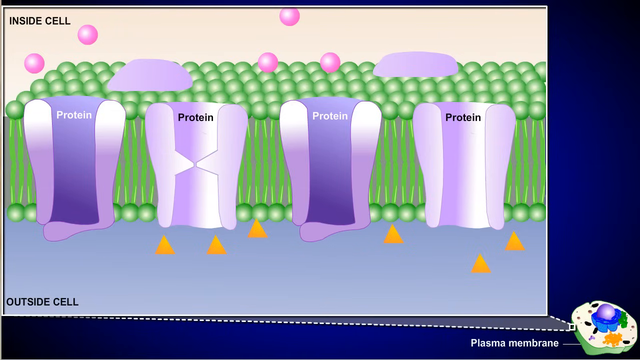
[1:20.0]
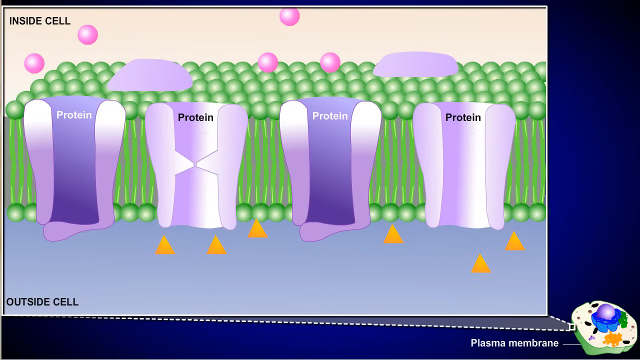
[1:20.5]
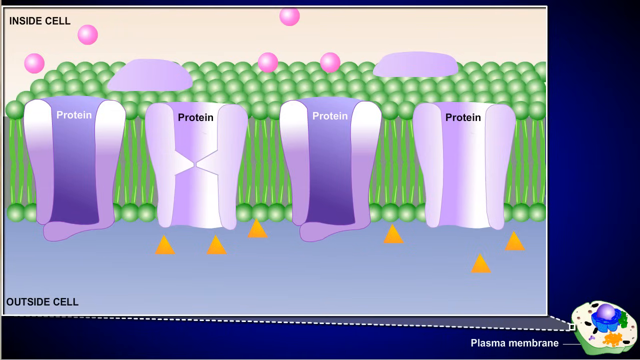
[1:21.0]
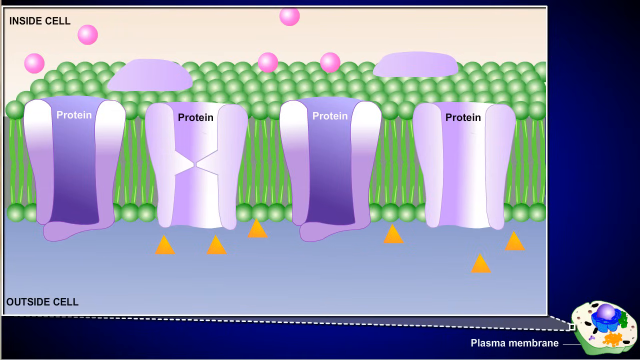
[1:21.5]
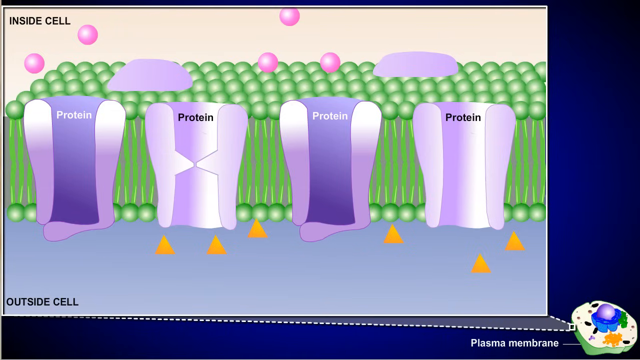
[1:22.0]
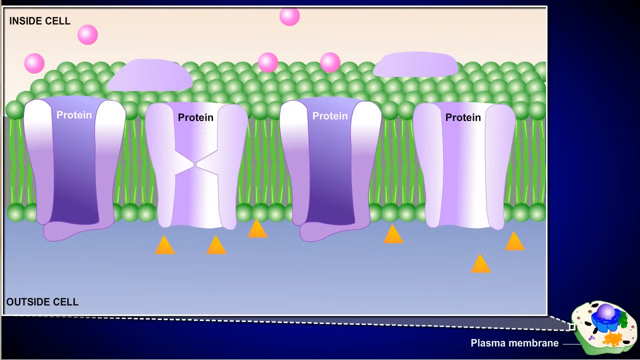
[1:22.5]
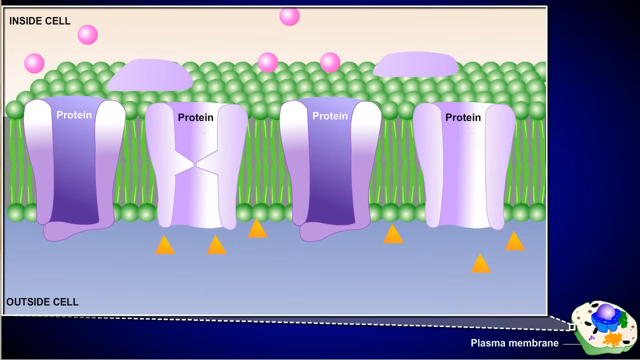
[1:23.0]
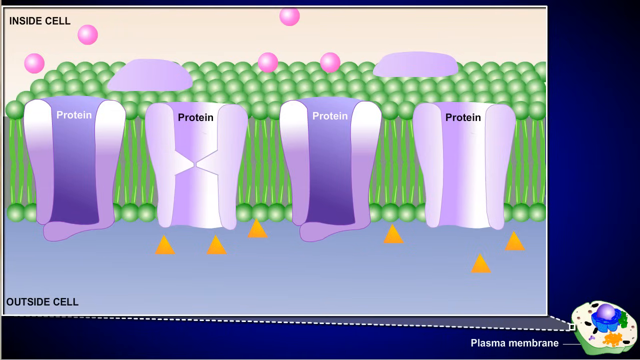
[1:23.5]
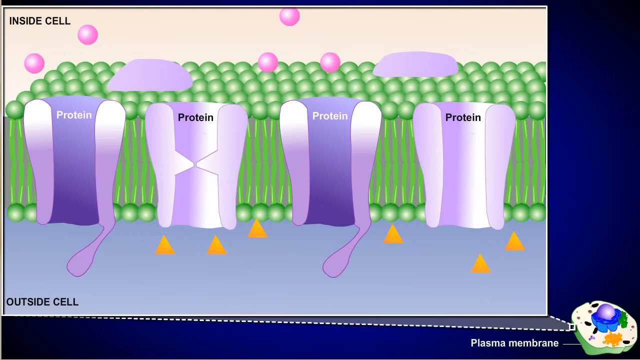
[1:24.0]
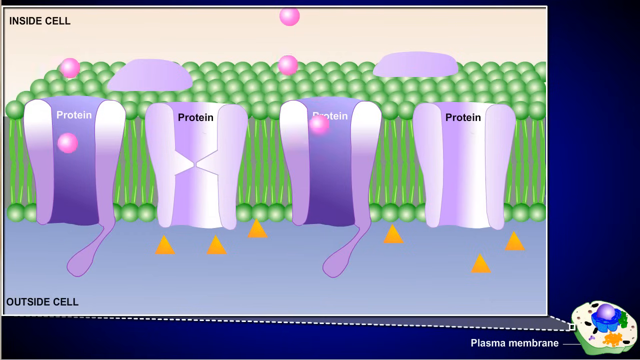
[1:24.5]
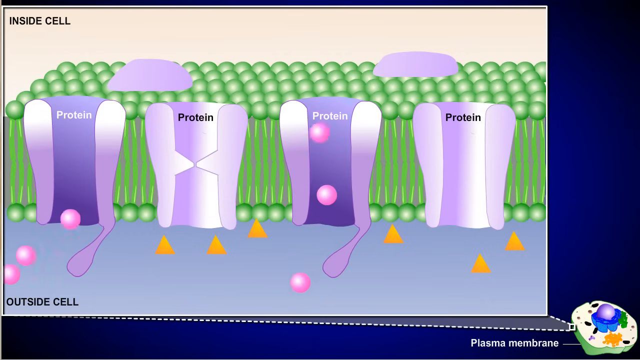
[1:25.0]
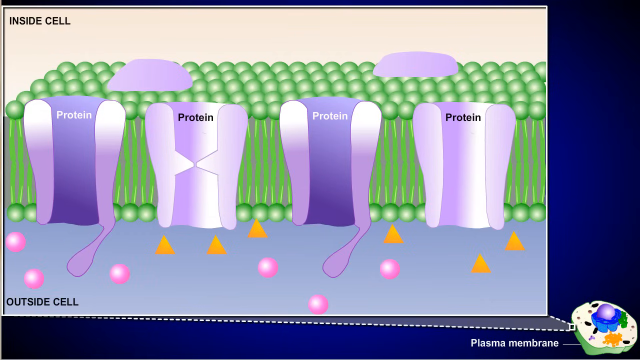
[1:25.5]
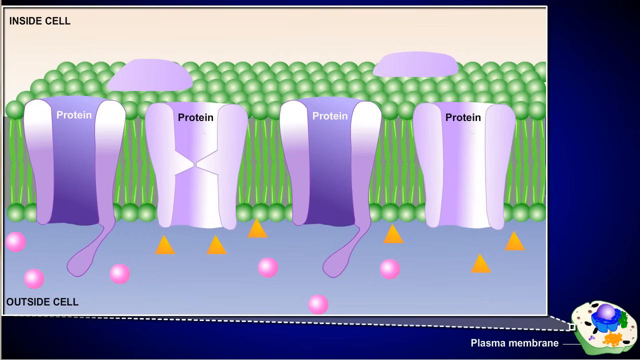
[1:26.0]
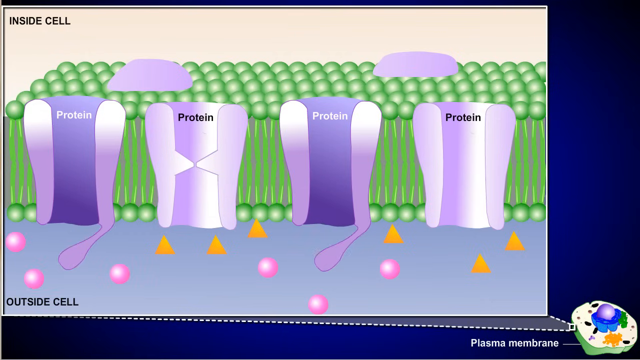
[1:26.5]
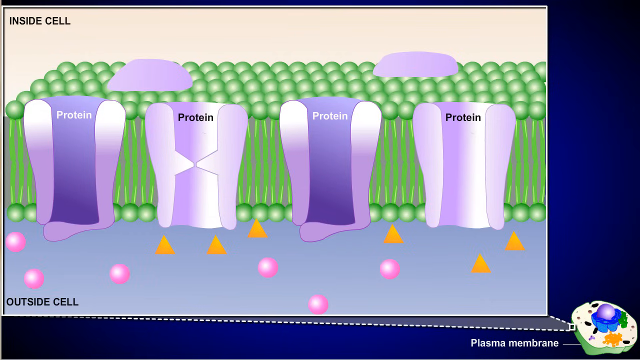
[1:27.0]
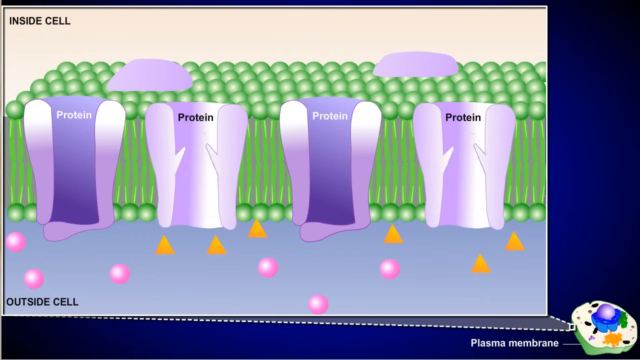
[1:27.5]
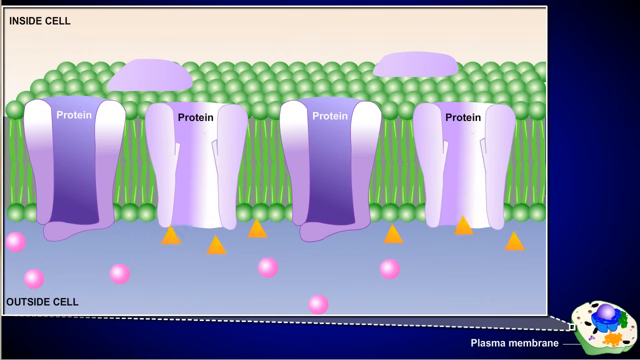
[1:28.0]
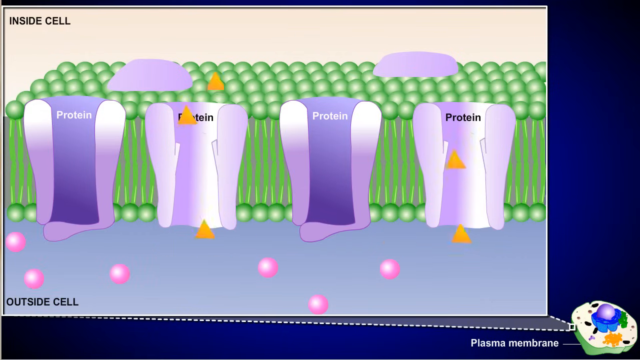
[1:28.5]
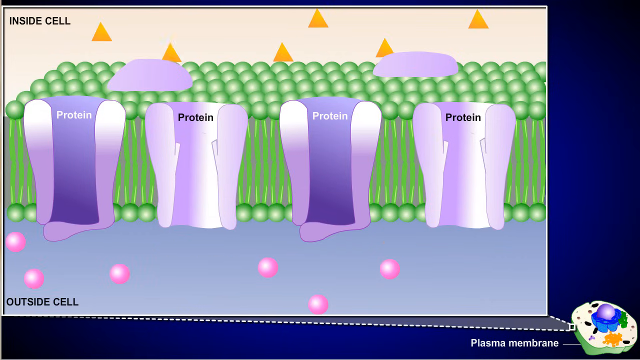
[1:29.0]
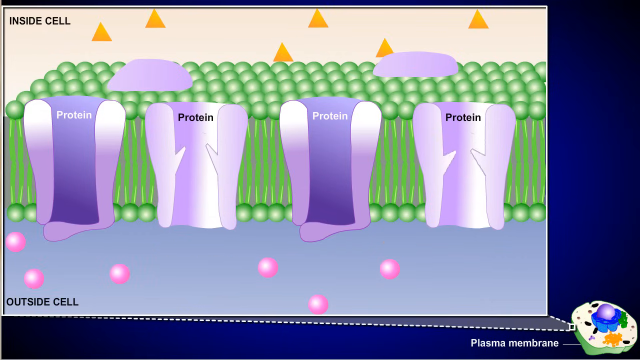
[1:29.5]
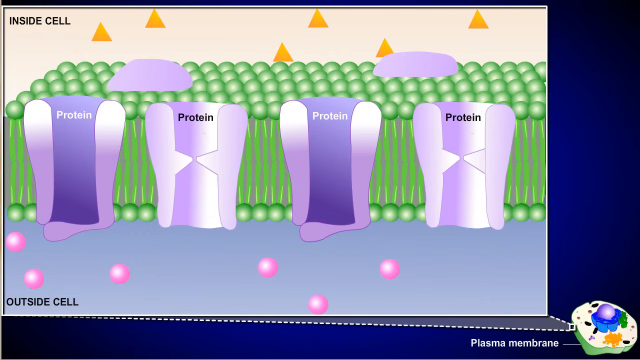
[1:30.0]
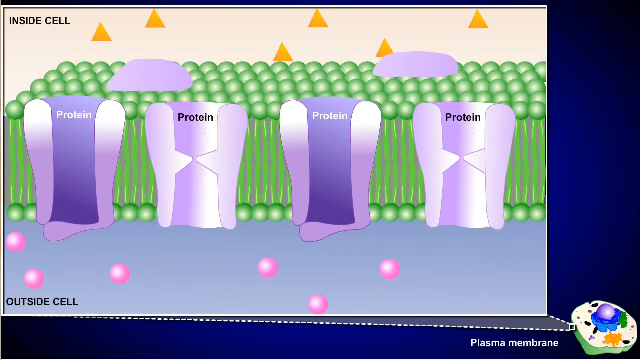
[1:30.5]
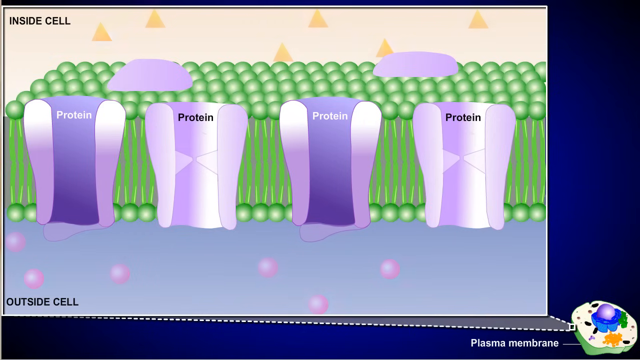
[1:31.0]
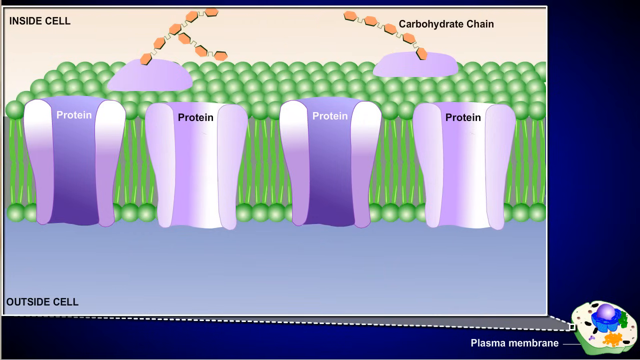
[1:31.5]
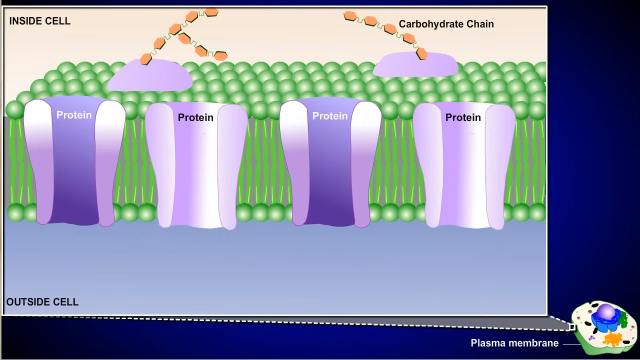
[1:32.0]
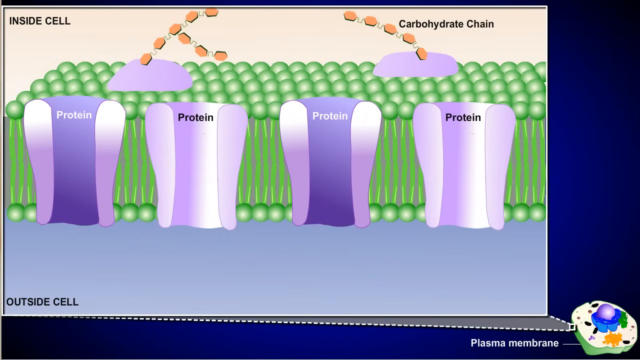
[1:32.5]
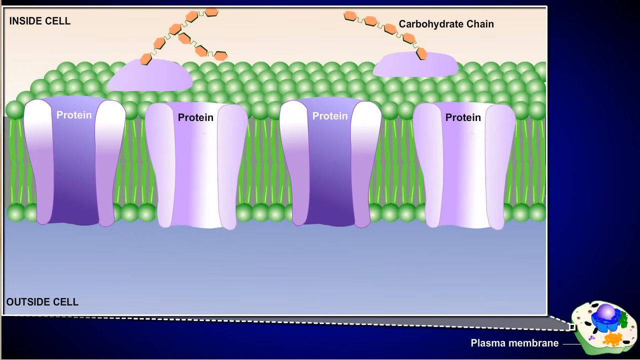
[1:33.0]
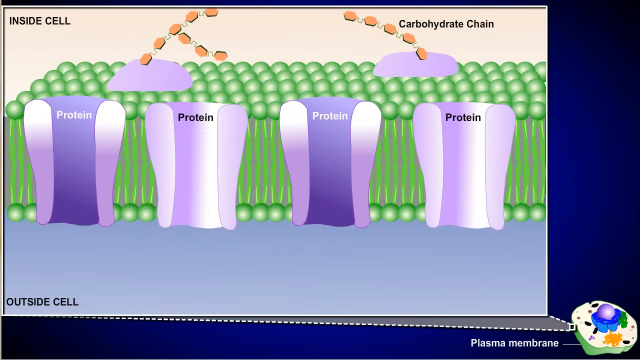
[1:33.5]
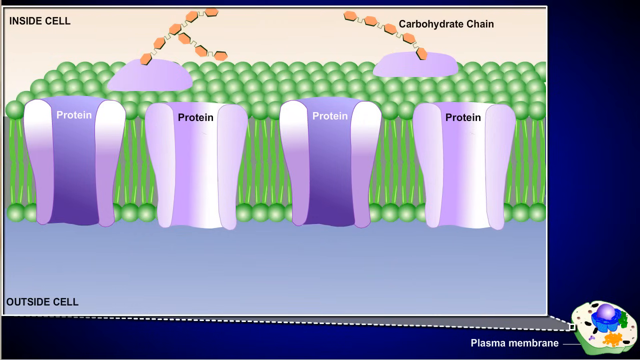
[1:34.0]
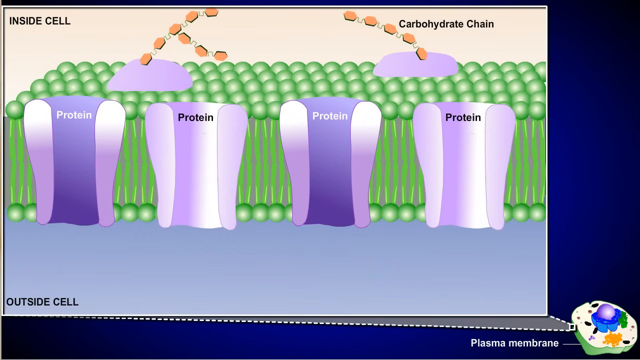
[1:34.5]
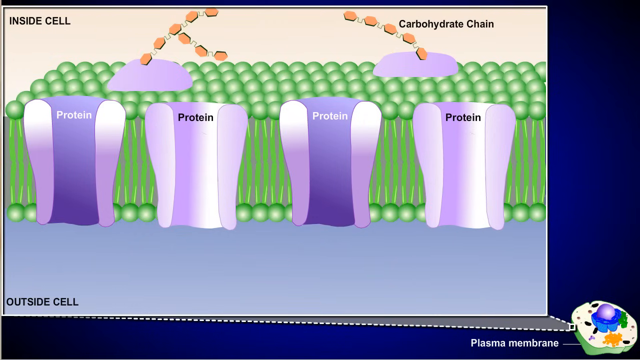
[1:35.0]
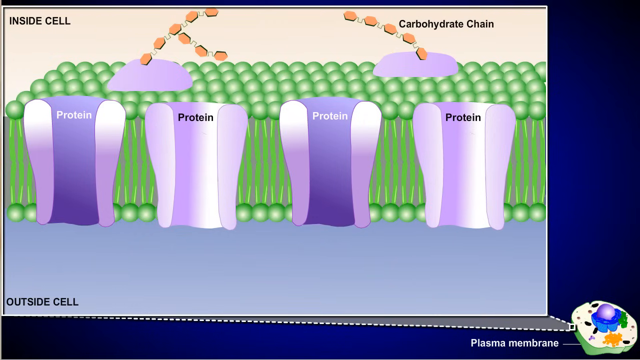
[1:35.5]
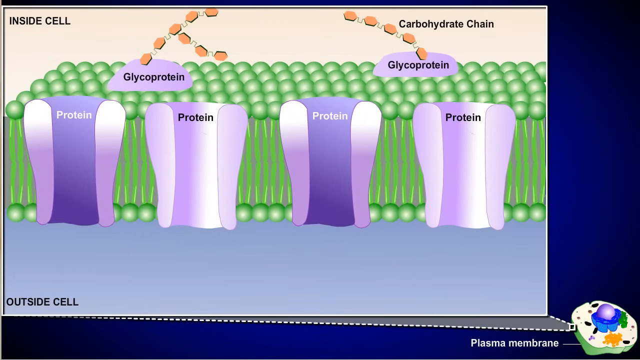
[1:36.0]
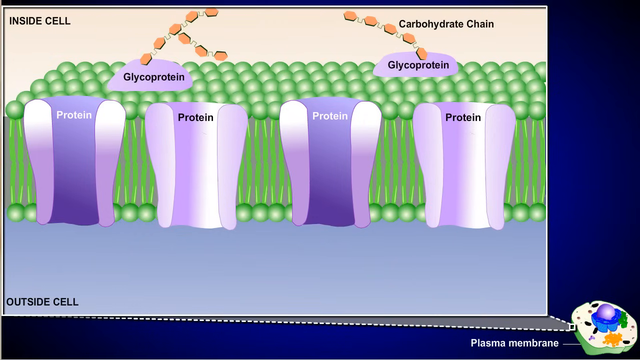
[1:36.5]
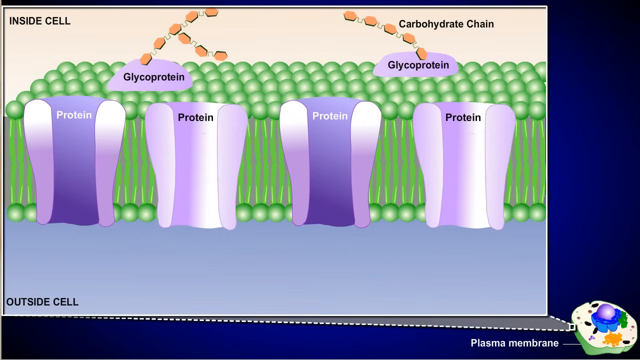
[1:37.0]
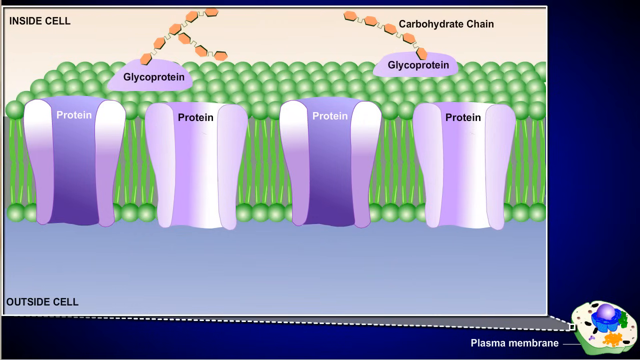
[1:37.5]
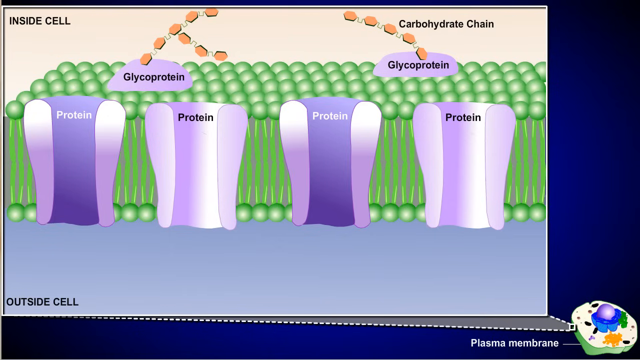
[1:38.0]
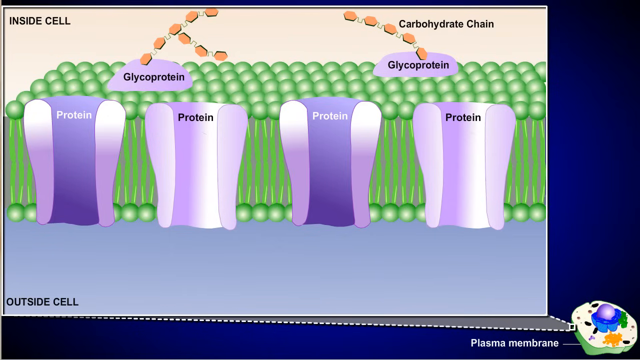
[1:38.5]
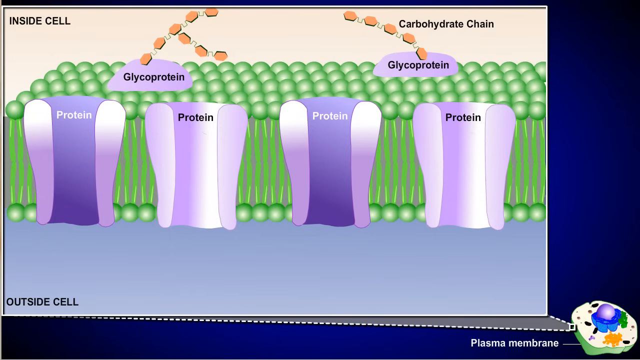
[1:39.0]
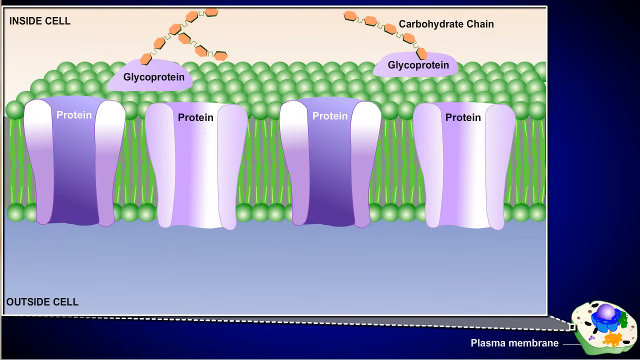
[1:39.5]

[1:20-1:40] Against a blue background, a white frame has a beige area at the top with black lettering on the left side saying "inside cell." There are five light pink balls, two to the left and three in the middle. Five rows of green balls have purple rounded edges, one to the left side and one to the right. Light and darkish purple rounded pieces are spaced out at the front, all saying "protein": the first in white, the second in black, the third in white, and the fourth in black. The bottom area is gray, with black lettering saying "outside cell." There are six yellow triangles, three to the left of center and three to the right of center. White lettering on the bottom right says "plasma membrane." In the center is a purple ball with a blue wall around it, green stems to the right, yellow stems to the bottom, brown dots around it, a white, beige circle, and a lighter green base. The pink balls from the top fall through the purplish rounded pieces and land in the gray area, three to the left and three to the right of center, with the bottom lip closed and the inner portions rounded. The triangles move from the bottom up into the beige area, two to the left, two in the center, and two to the right. Black lettering appears on the right side saying "carbohydrate chain," and orange jagged edges curve from the center of the right and the center of the left towards the middle. The purple rounded portions at the top read "glycoprotein" in black lettering.